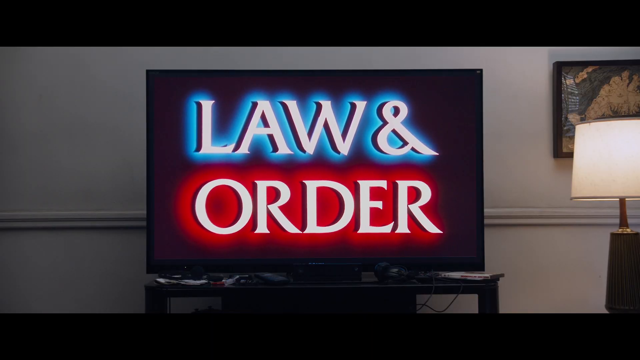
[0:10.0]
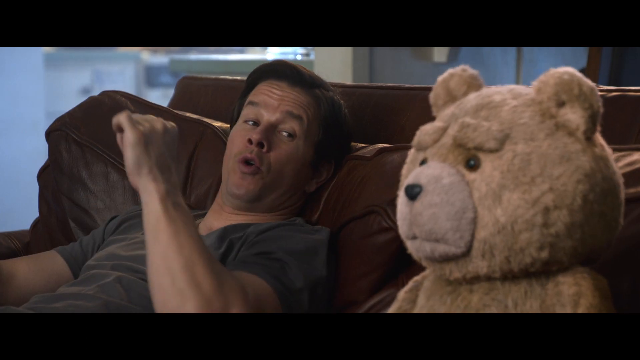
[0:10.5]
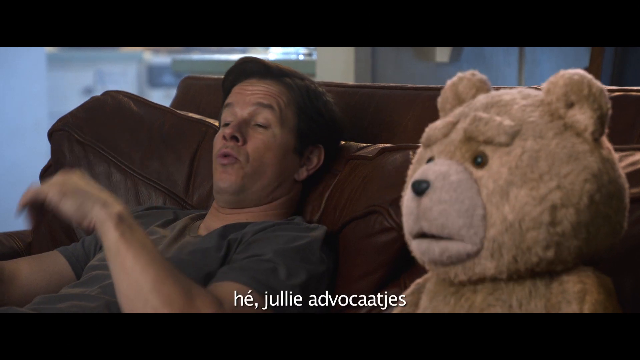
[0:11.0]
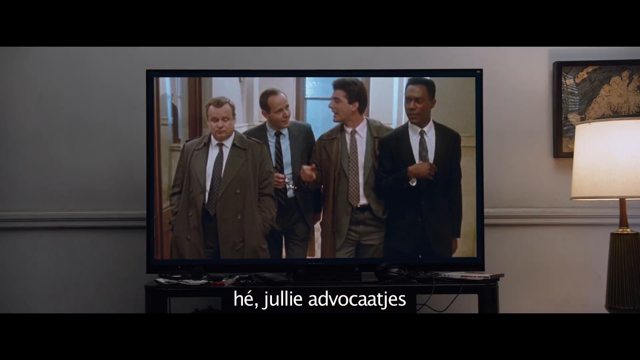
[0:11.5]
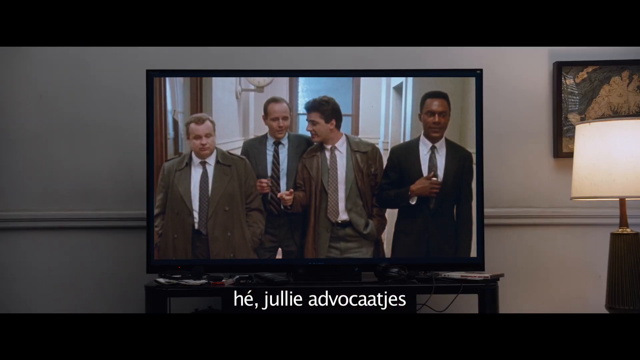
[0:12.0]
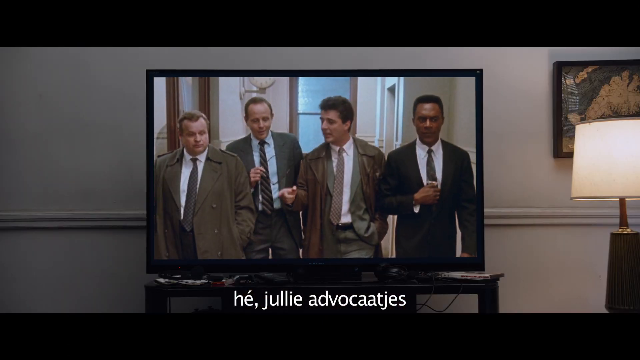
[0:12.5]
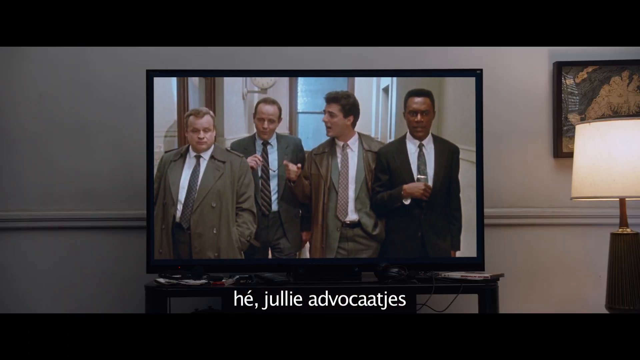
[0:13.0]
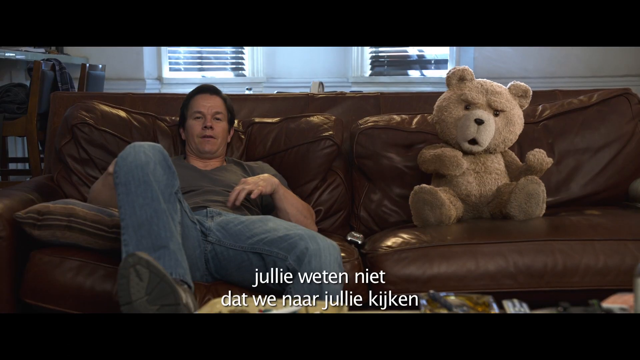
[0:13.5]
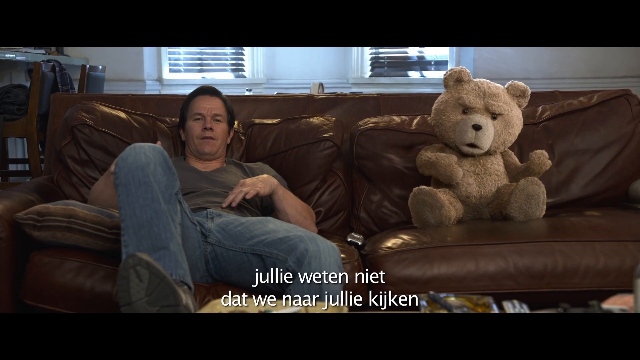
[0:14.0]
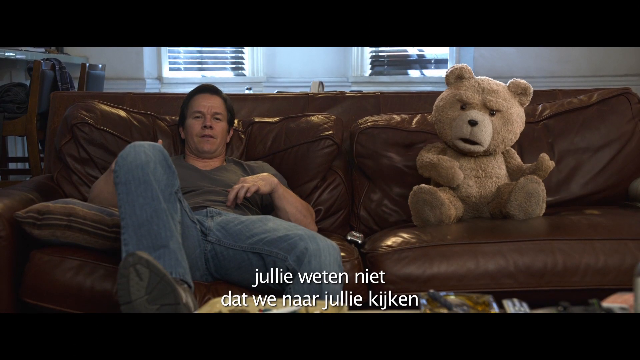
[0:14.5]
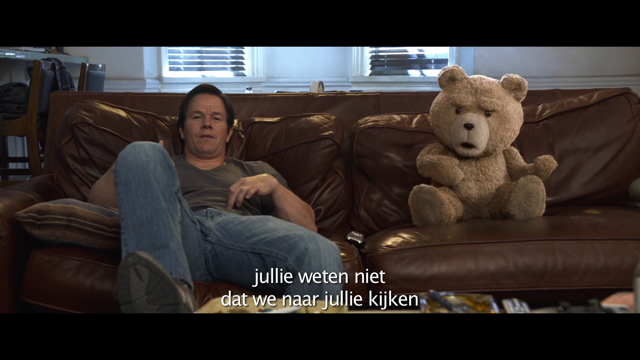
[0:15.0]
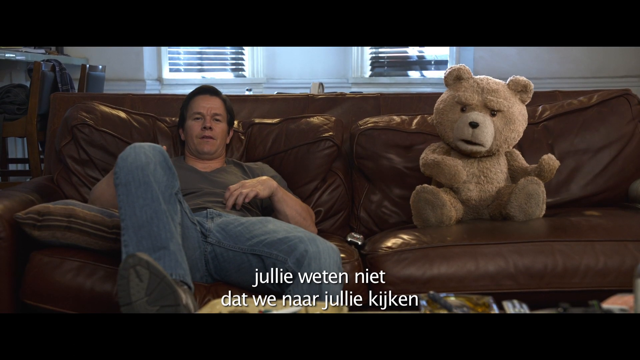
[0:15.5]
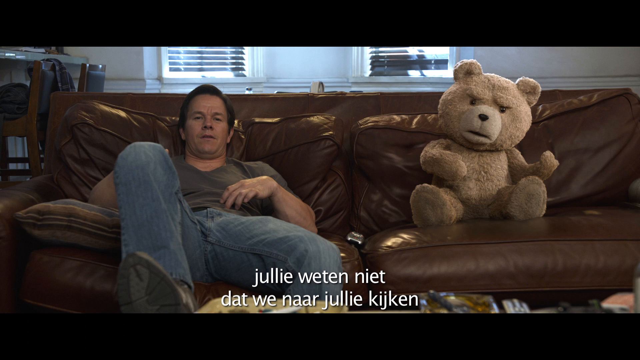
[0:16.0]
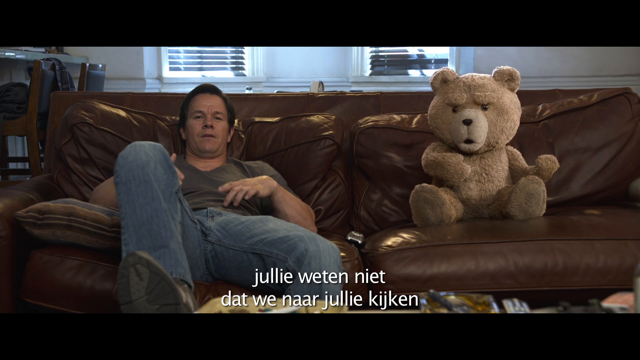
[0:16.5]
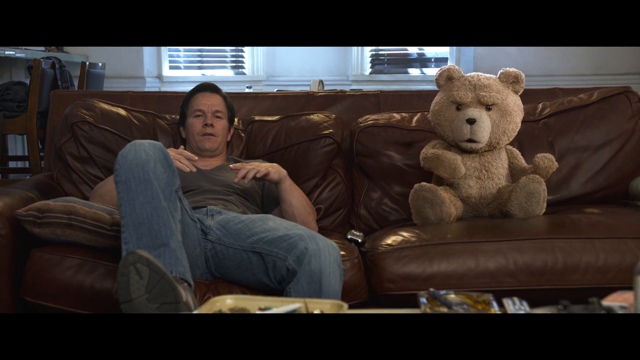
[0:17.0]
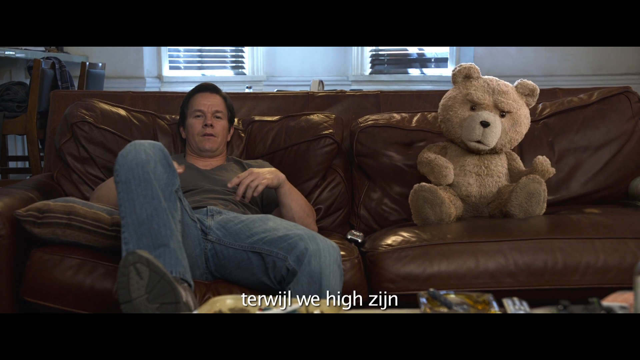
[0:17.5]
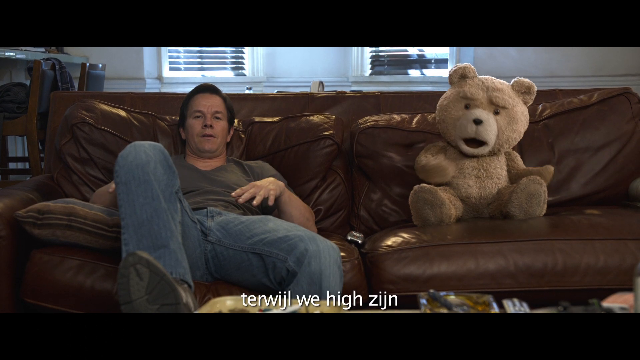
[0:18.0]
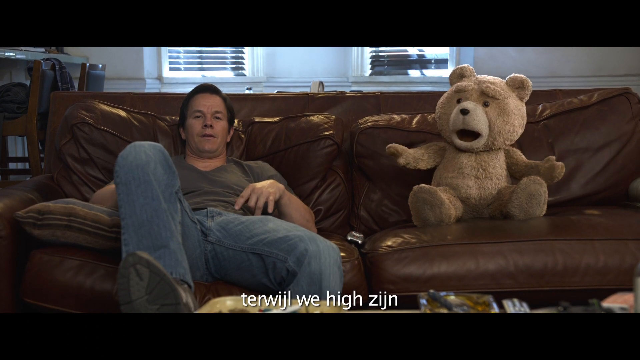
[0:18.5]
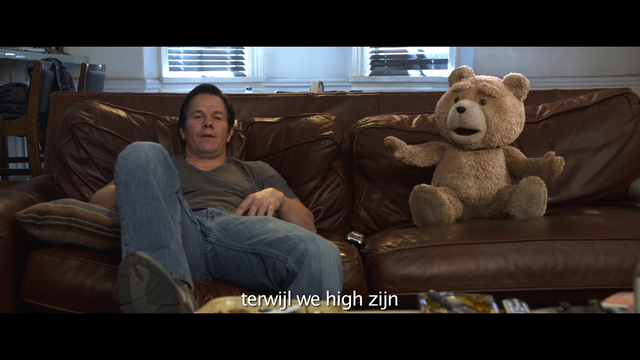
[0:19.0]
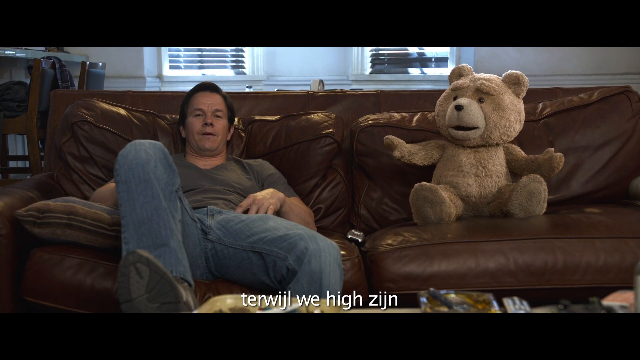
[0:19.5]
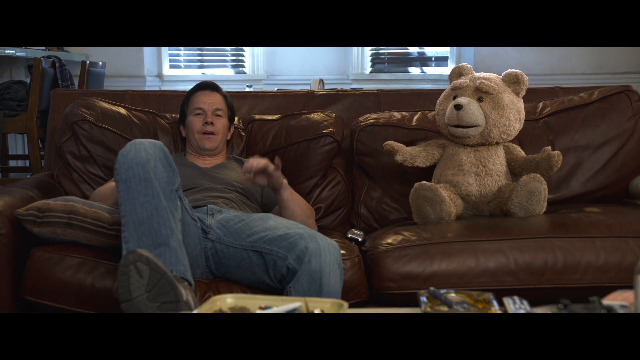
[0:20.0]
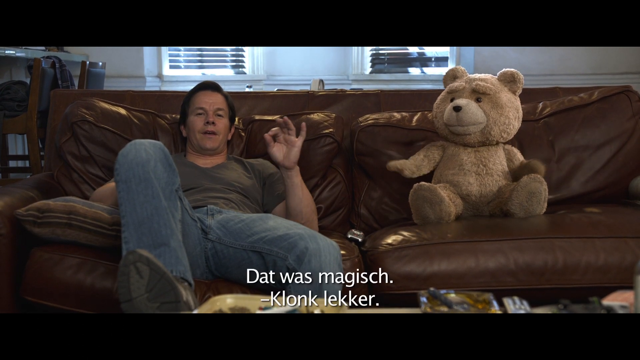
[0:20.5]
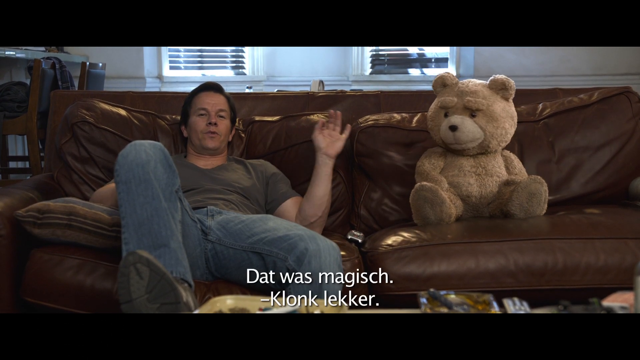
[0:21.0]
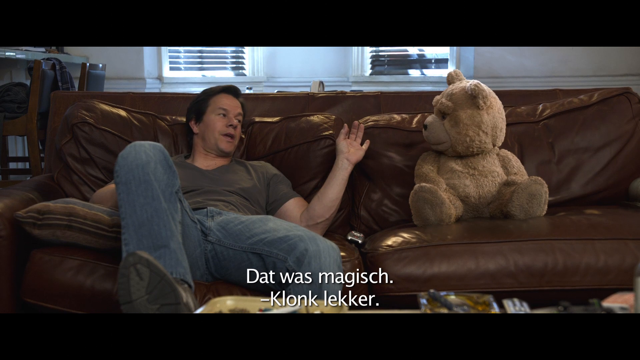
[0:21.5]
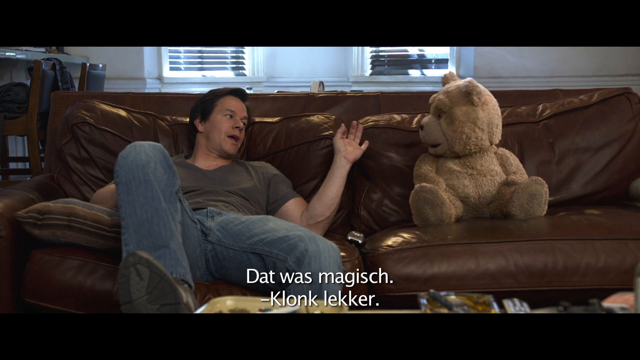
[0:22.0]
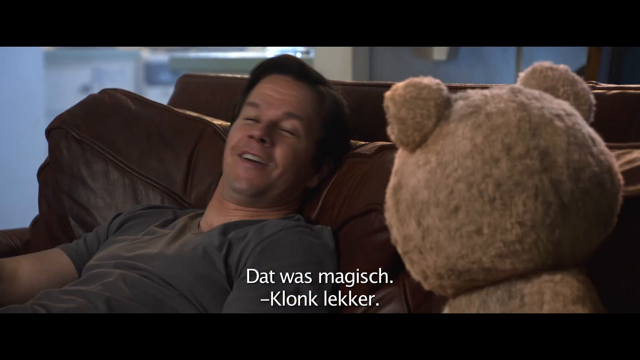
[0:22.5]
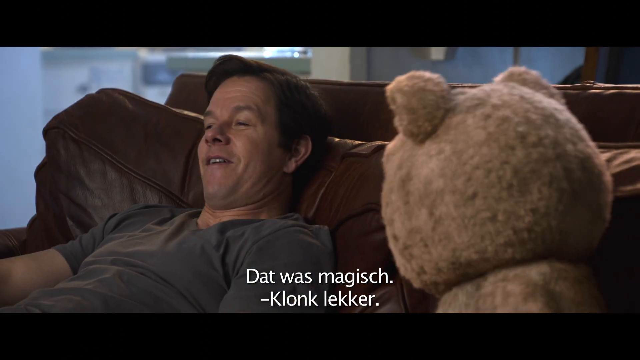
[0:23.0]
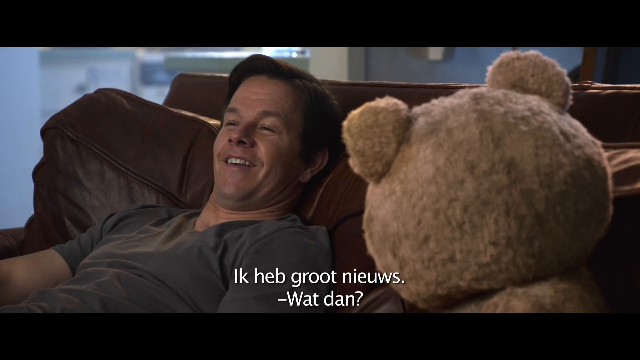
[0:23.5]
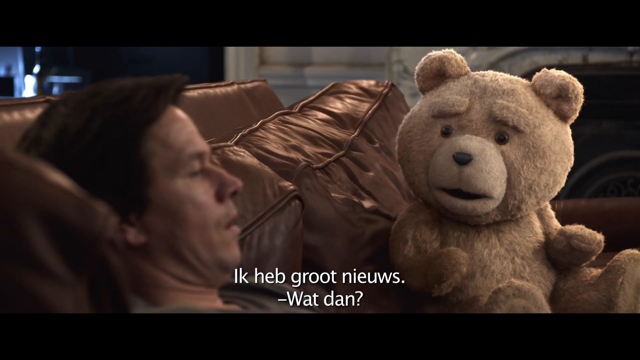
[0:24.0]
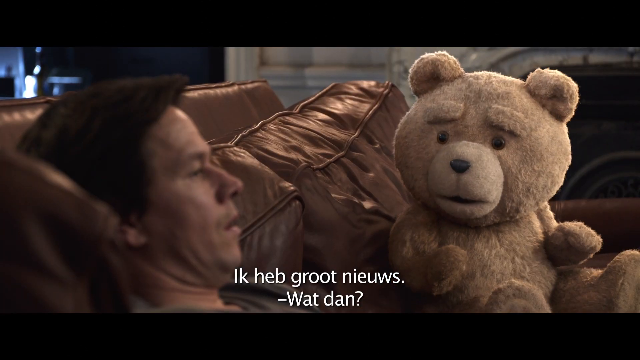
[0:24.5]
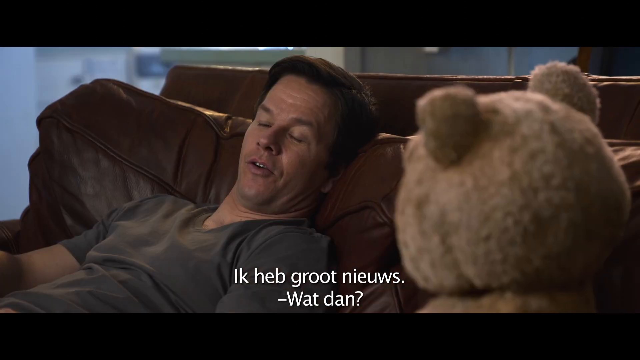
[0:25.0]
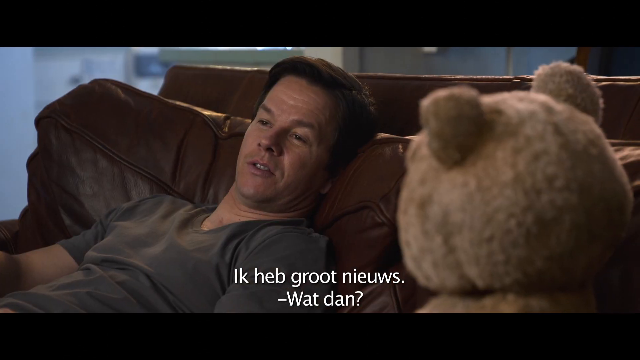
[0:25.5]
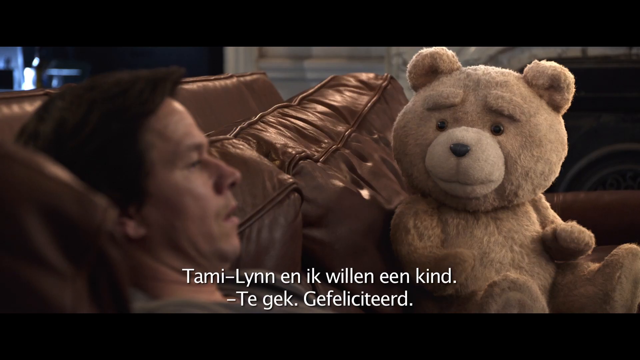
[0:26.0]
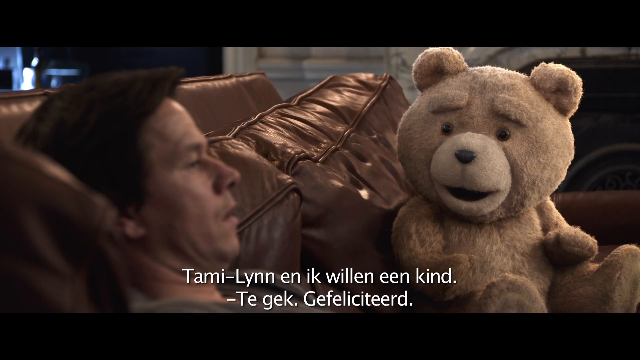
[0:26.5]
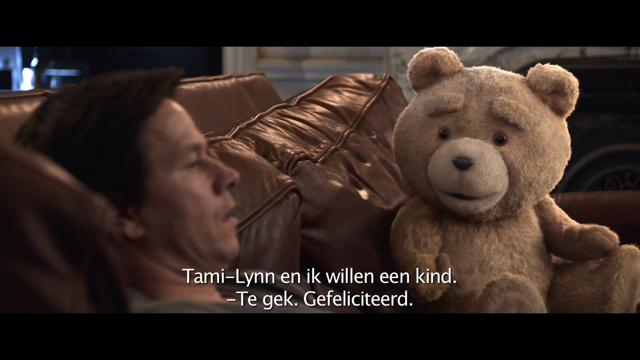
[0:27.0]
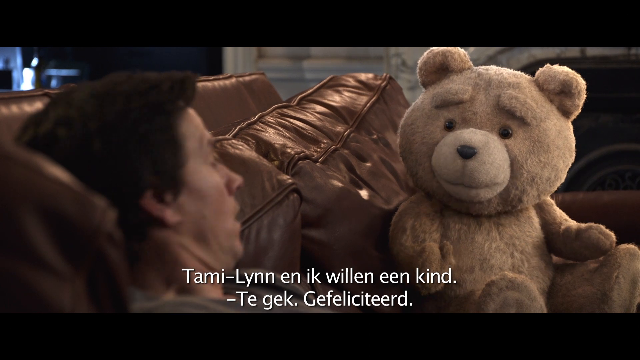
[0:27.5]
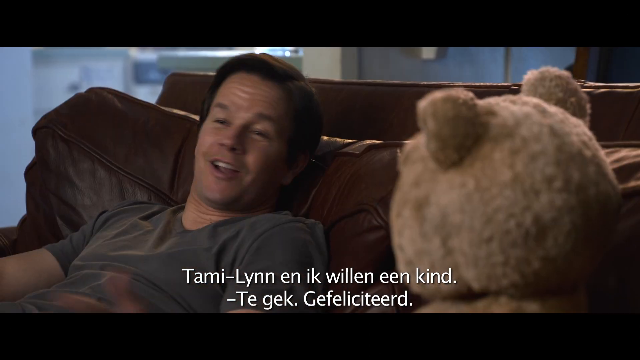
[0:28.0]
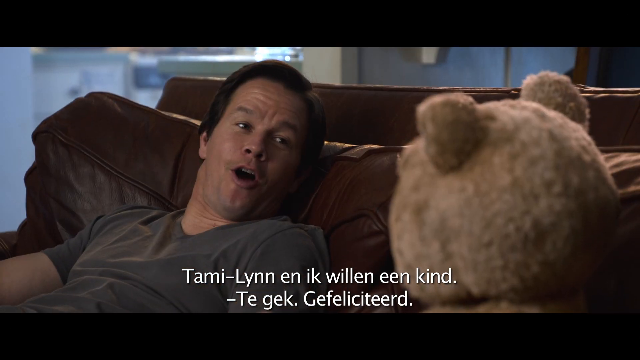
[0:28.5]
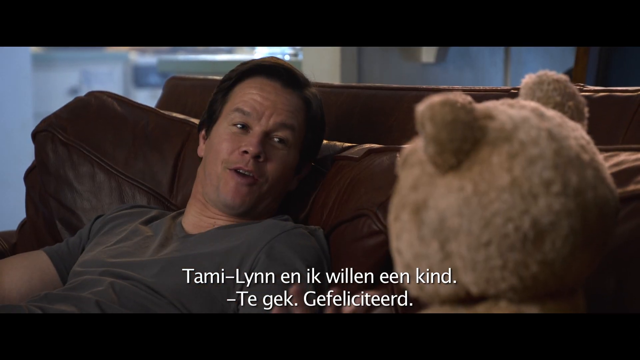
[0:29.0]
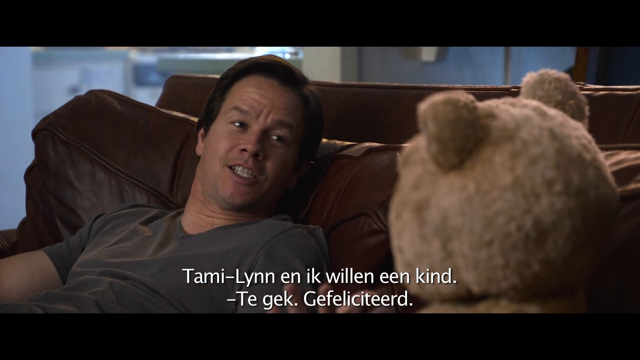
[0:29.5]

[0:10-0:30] The view switches to the TV they are watching, which shows Law and Order, with the title in white capitals: "Law" is backlit in illuminated blue, and "Order" at the bottom has illuminated red behind it. Then comes a close-up of the actor and the teddy bear as they continue talking, followed by a view of them on the couch, panned off a little. Mark Wahlberg wears a short-sleeved gray shirt, Levi's and tennis shoes, and has short brown hair; he appears to be perhaps in his 40s. The two keep talking, with the German subtitles at the bottom. The scene cuts to people in suits on Law and Order walking toward the screen. The teddy bear is tan, with a lighter tan around his nose and mouth.